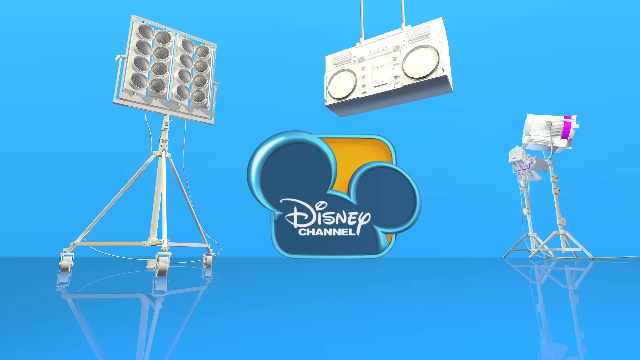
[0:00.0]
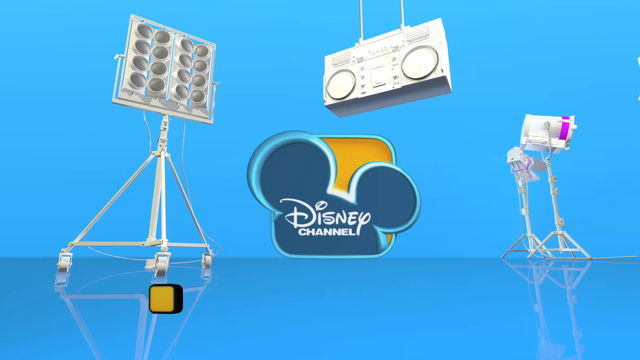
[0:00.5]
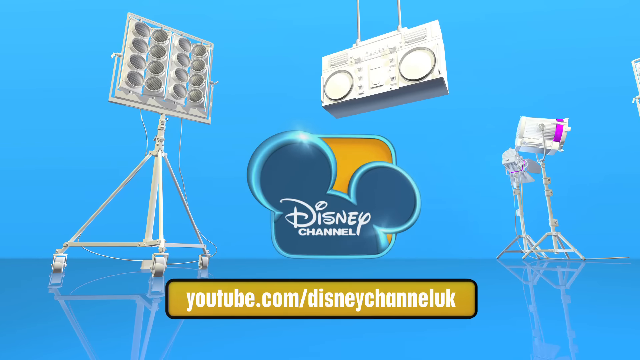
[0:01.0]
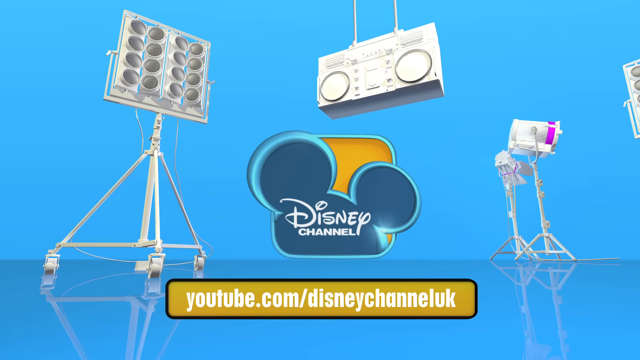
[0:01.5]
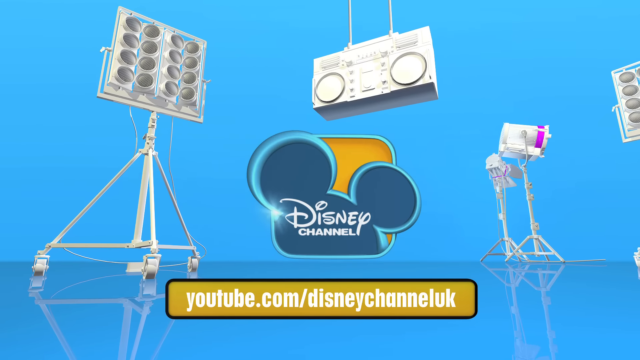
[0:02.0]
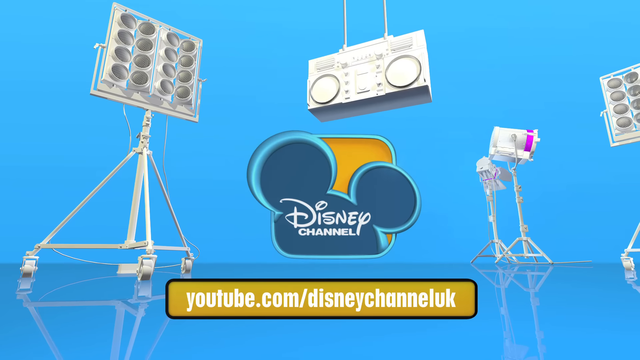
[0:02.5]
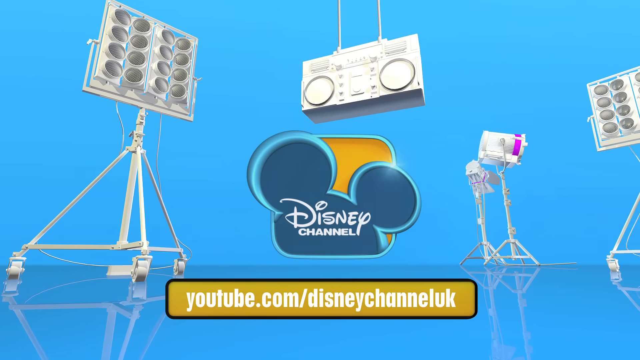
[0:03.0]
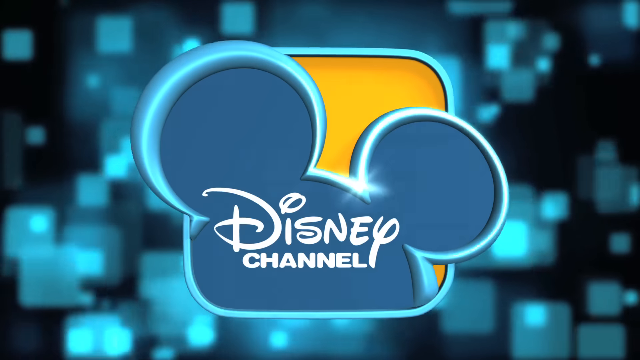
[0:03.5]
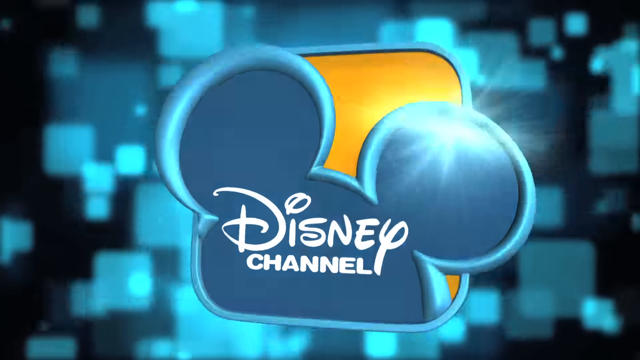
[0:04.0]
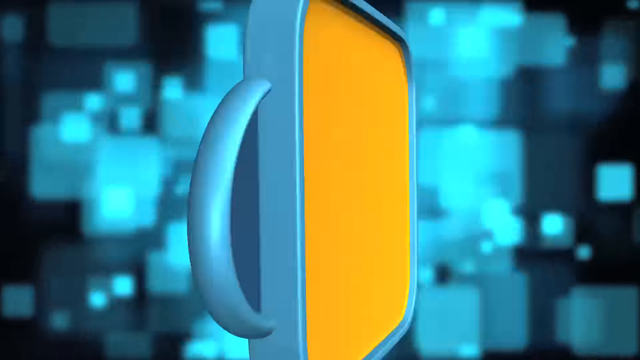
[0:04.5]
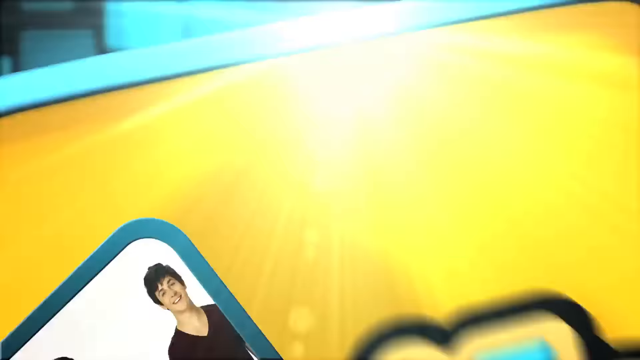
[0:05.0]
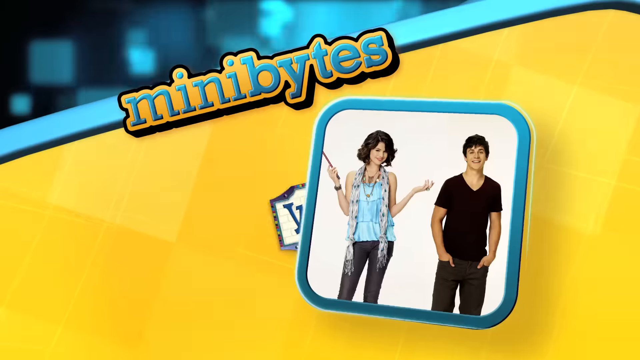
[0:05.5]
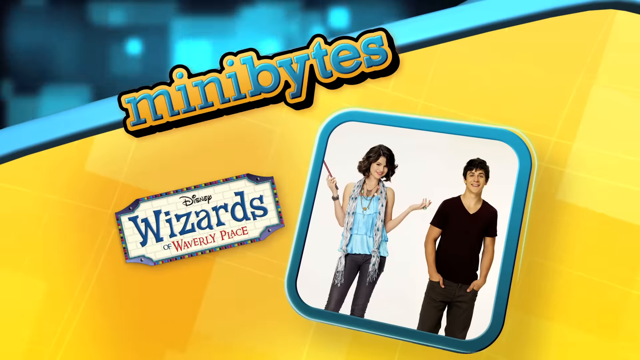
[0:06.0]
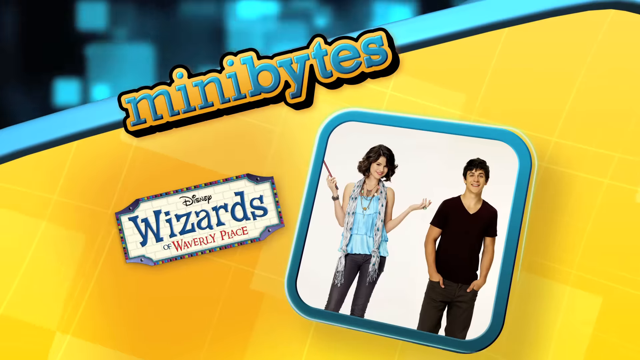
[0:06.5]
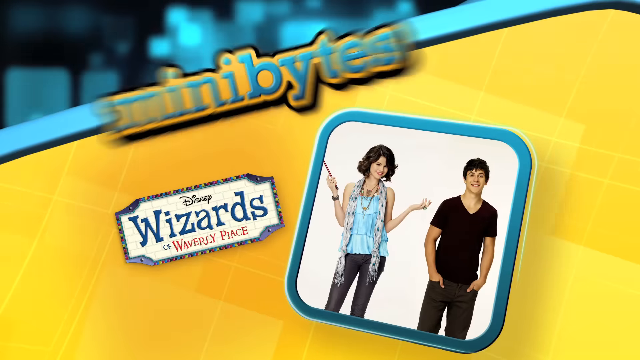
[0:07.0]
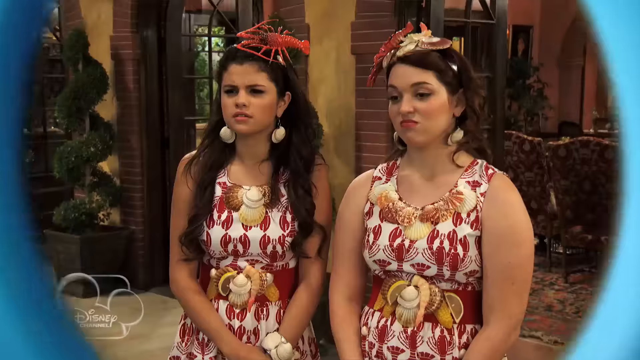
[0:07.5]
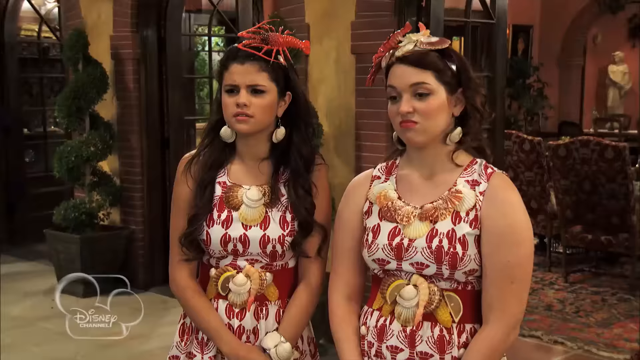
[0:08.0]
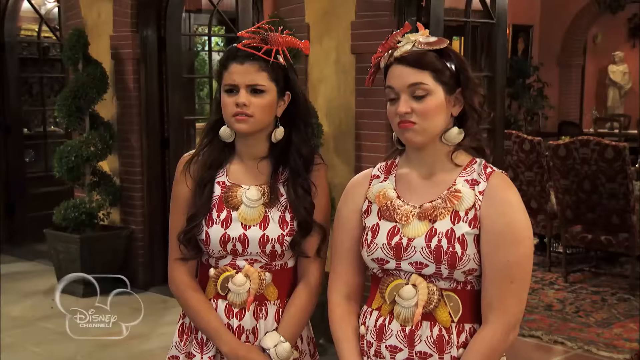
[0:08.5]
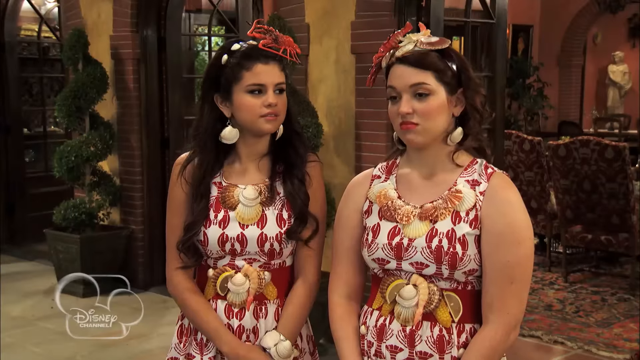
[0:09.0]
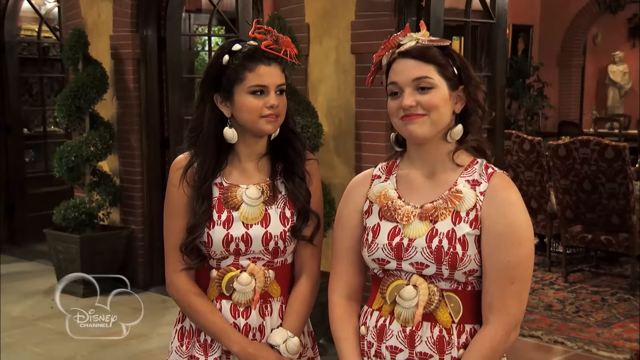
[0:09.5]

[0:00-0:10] The video starts with the Disney Channel logo in the middle of the screen. Below it, "YouTube" appears in white text with a yellow rectangle and a black outline. To the left is a set of speakers on a stand with wheels, to the right of that is a stereo, and to the right of that are some camera icons. The link finishes out "YouTube.com/Disney Channel UK". The screen then shows a zoomed-in Disney logo with a yellow shape behind it on a mostly blue and black background. The logo does a few spins, and the next screen shows two characters on the right-hand side in a white square outlined in blue. To the left, "Disney Wizards" is written in blue text, "of" in black text and "Waverly Place" in red text, and above it says "Mini Bites". The scene cuts to two characters who both wear the same white, red and gold dress, seen from the front. Both have puzzled expressions. They are indoors, with walls, miscellaneous objects and chairs in the background. The character on the left turns to the character on the right, and they both smile.